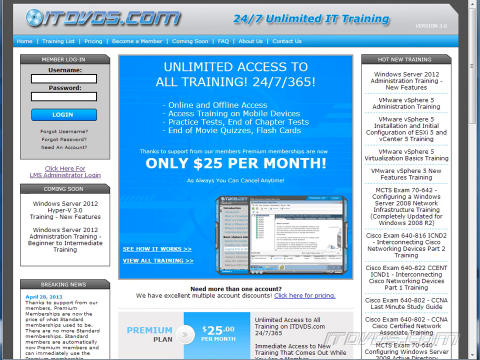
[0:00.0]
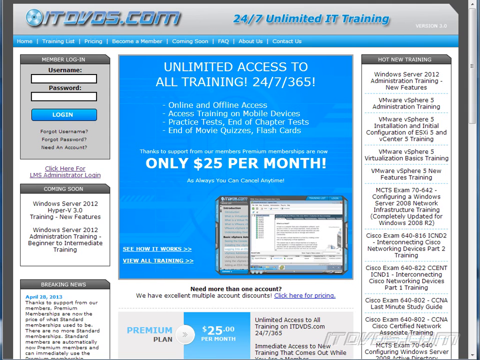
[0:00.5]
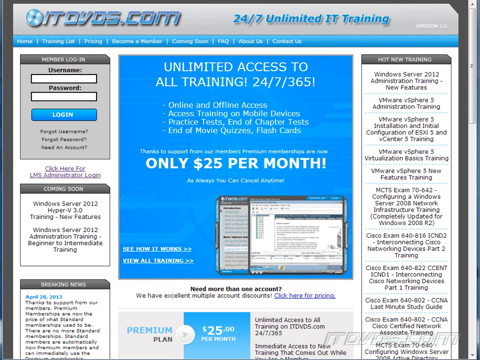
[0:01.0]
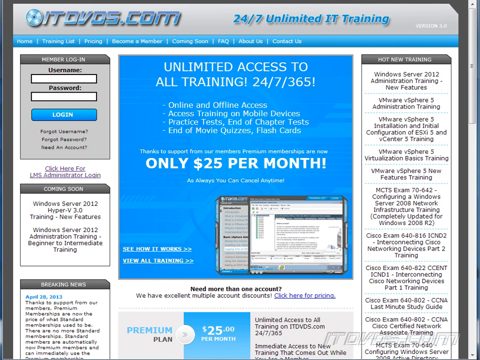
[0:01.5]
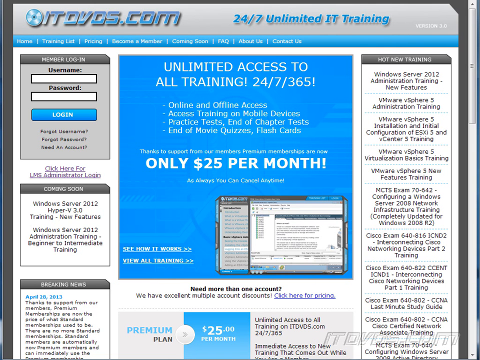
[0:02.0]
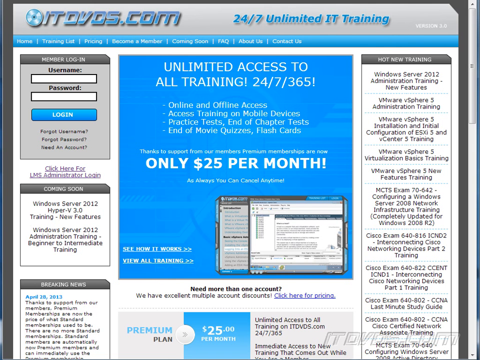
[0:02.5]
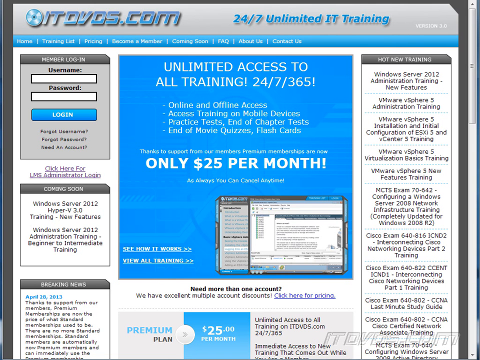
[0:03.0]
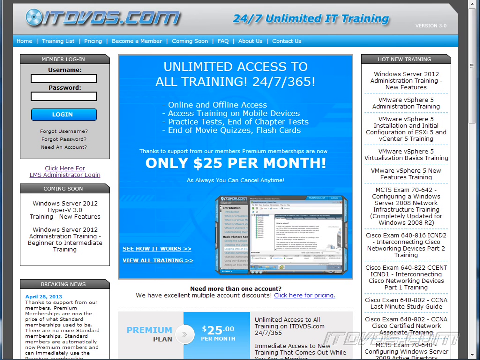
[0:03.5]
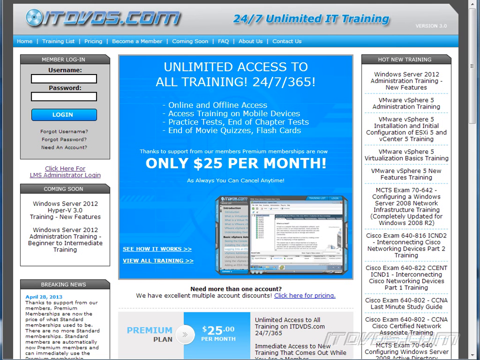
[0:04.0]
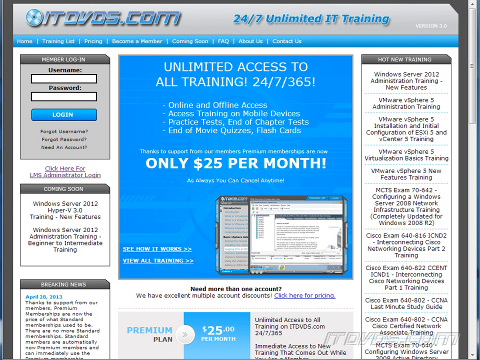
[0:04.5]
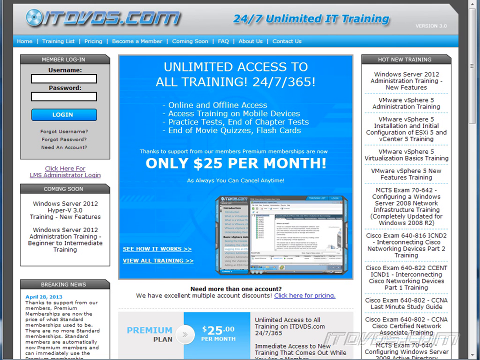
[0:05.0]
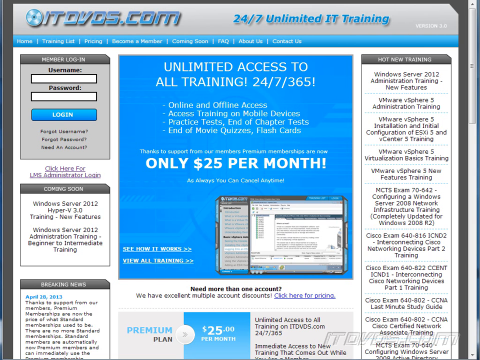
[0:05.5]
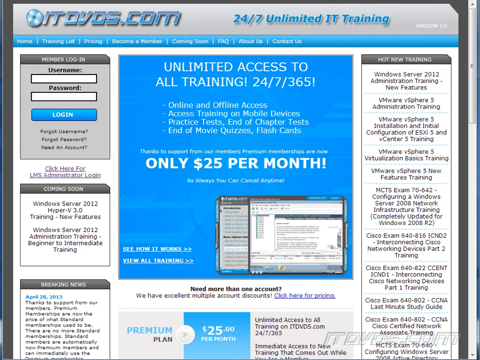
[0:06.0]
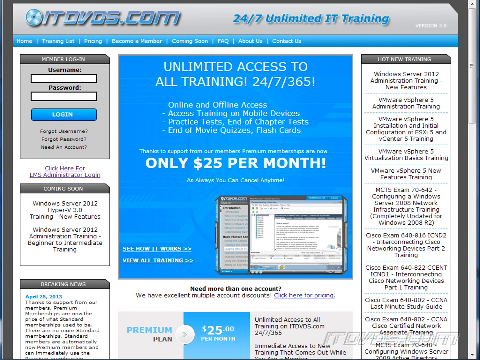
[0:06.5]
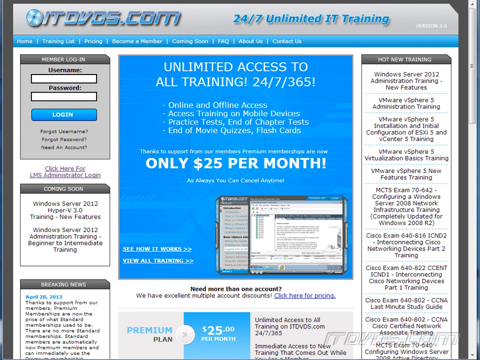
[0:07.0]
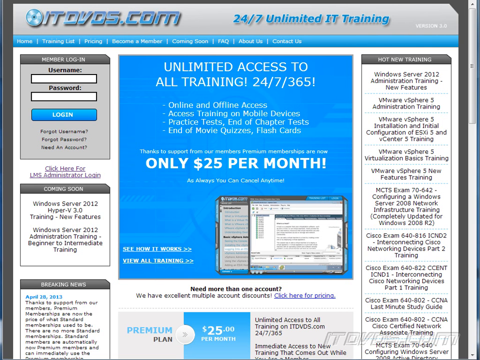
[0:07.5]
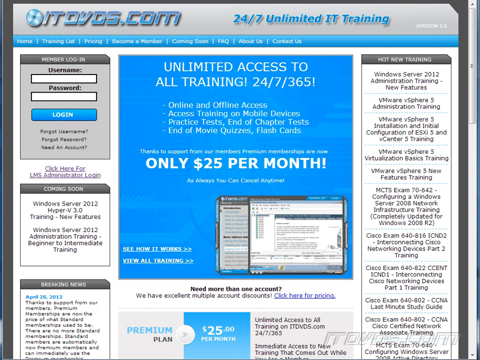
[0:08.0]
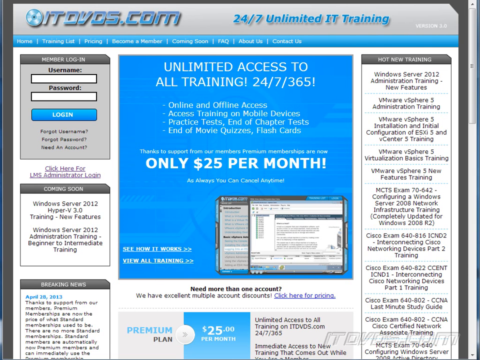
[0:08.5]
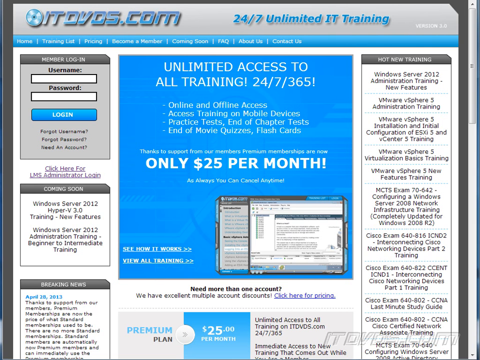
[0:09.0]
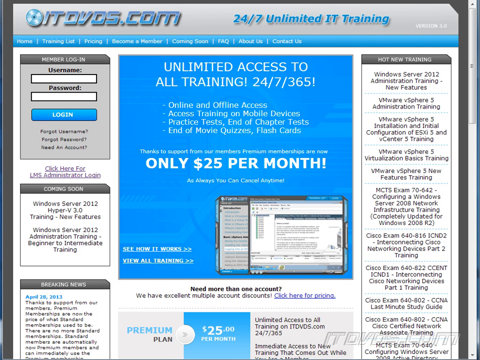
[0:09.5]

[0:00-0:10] An advertisement says there is "unlimited access to all training 24x7, 365 days" and that it is "only $24 per month." It also mentions a "hot new training" for Windows Server 2012 automation training, and the training appears to be mainly computer-related. A recording of a computer screen plays, showing a user restarting their computer. A username and password appear on the advertisement.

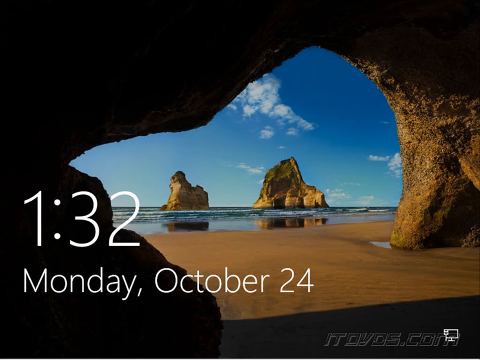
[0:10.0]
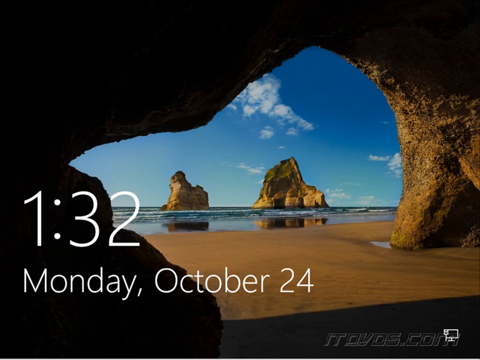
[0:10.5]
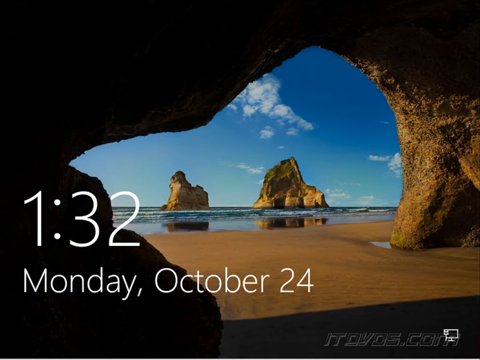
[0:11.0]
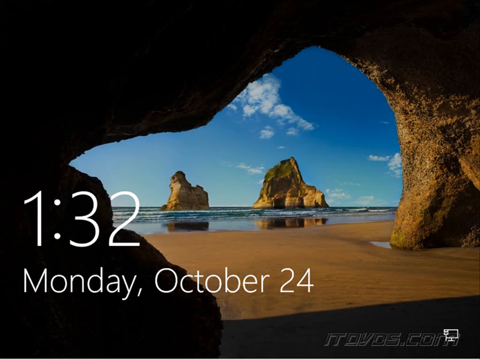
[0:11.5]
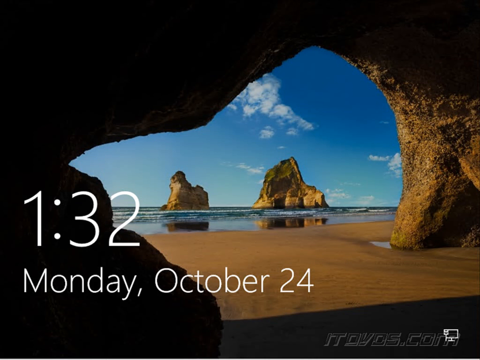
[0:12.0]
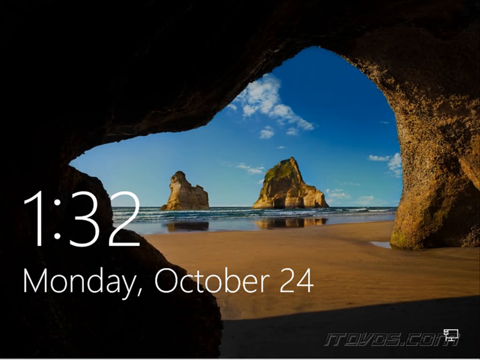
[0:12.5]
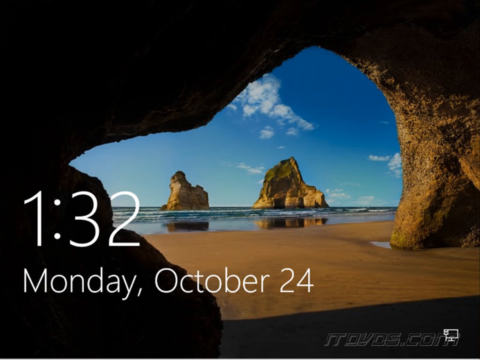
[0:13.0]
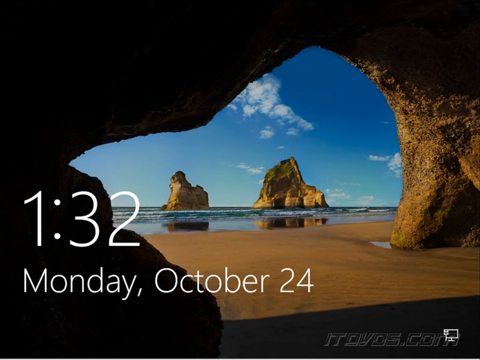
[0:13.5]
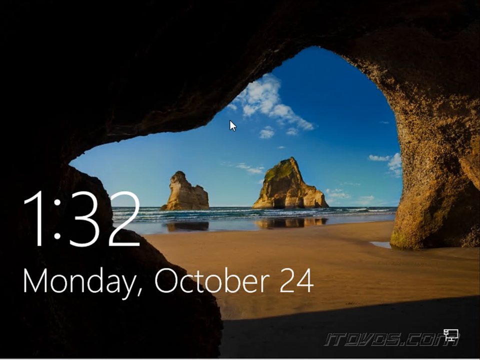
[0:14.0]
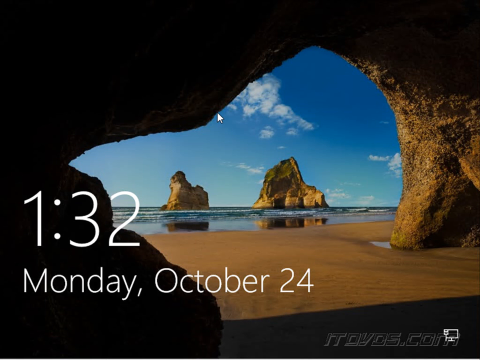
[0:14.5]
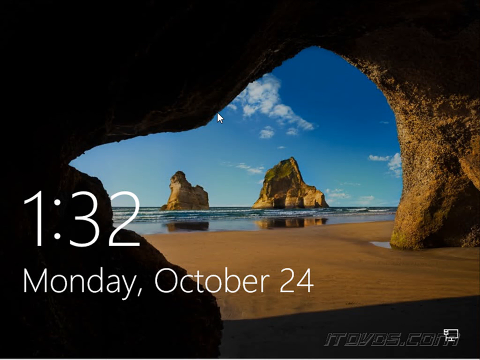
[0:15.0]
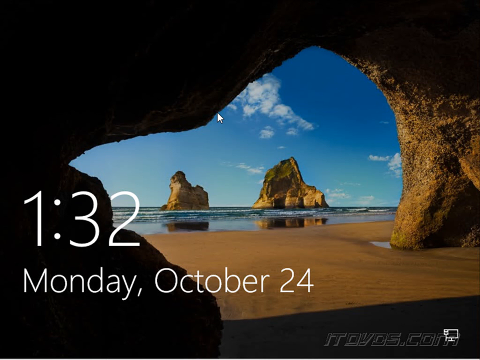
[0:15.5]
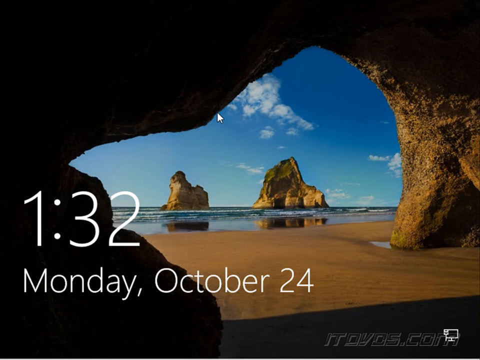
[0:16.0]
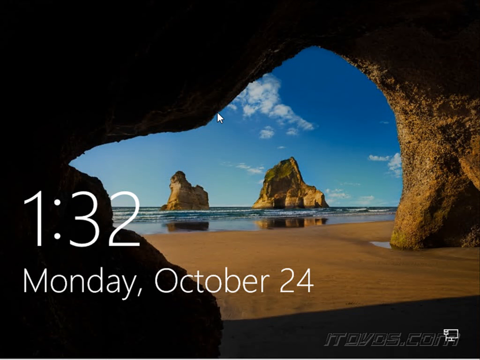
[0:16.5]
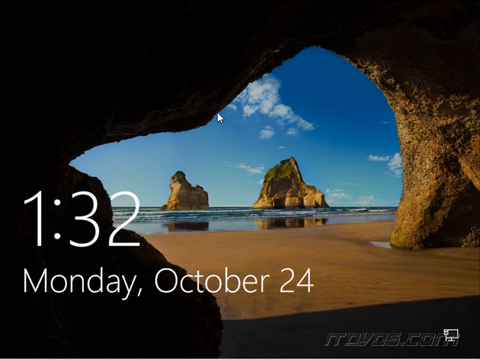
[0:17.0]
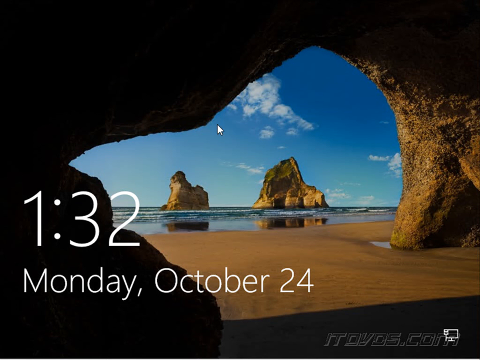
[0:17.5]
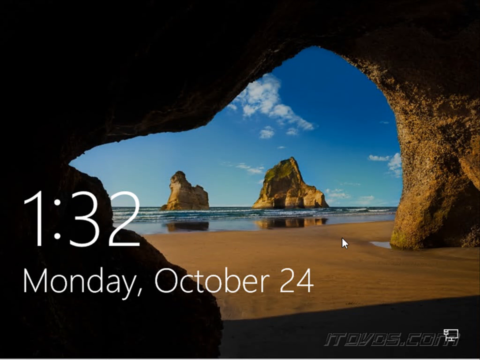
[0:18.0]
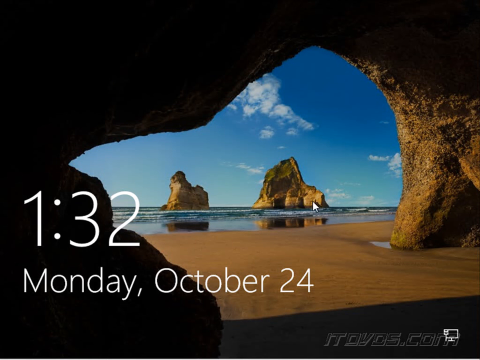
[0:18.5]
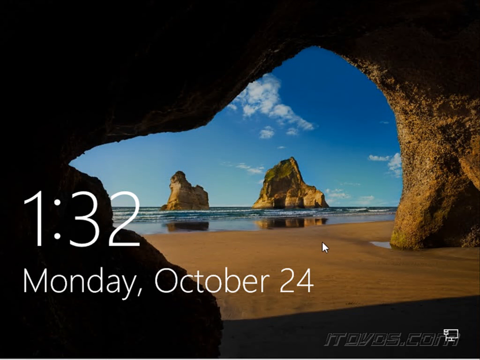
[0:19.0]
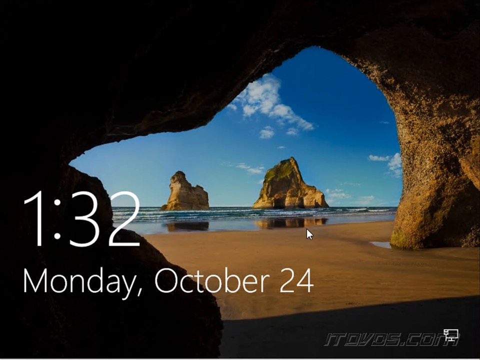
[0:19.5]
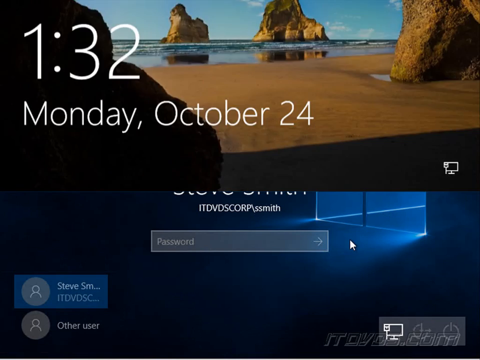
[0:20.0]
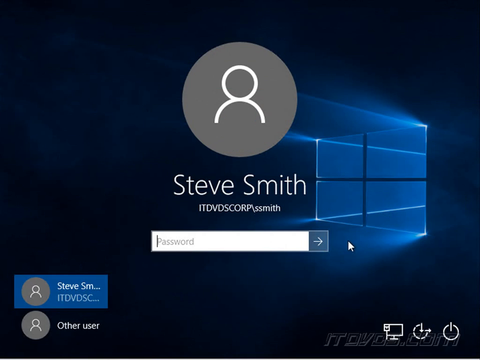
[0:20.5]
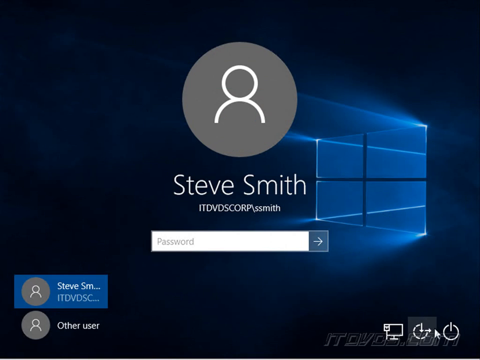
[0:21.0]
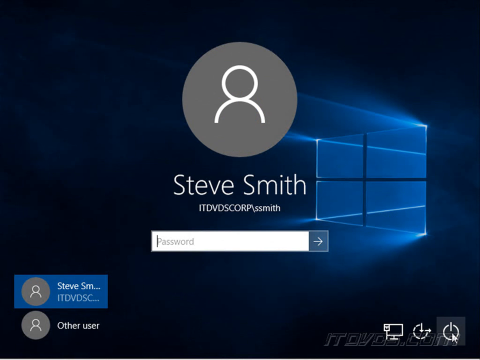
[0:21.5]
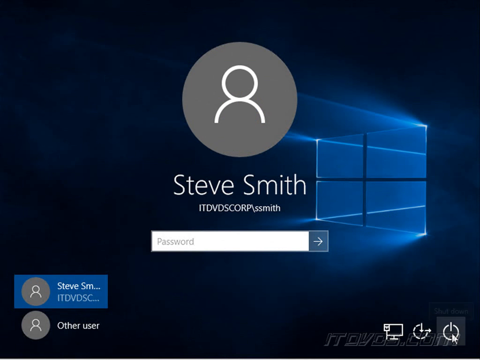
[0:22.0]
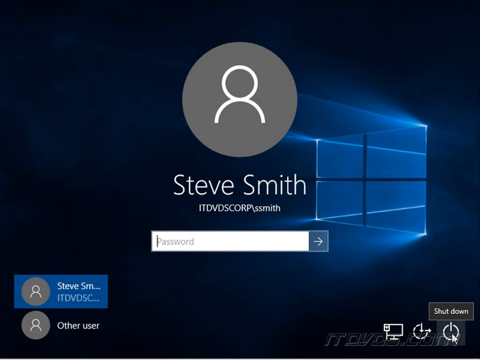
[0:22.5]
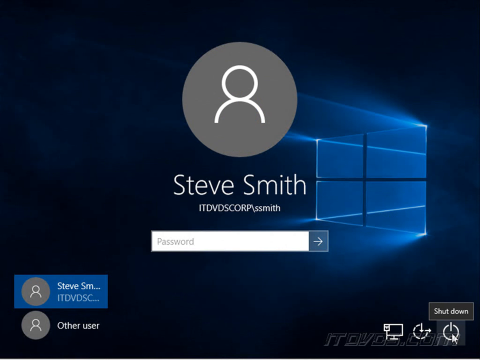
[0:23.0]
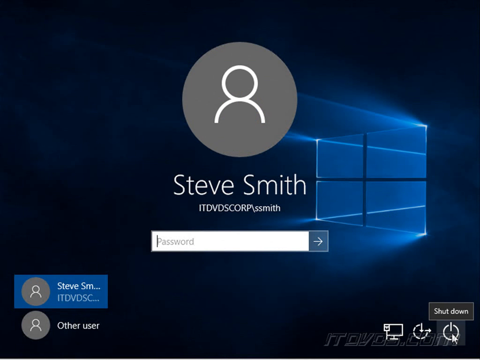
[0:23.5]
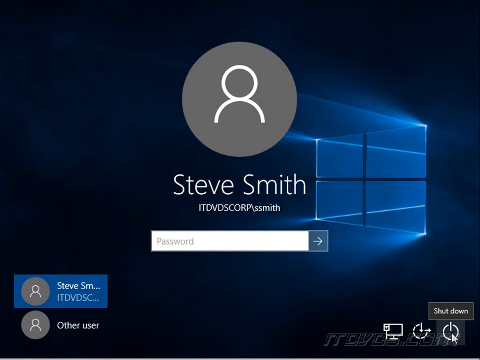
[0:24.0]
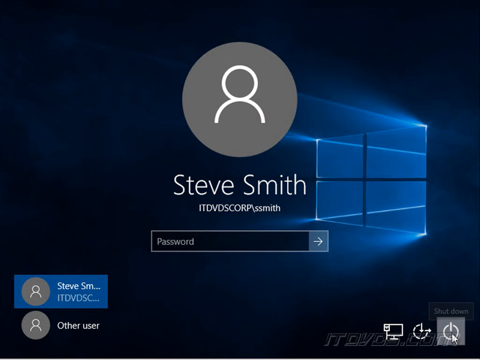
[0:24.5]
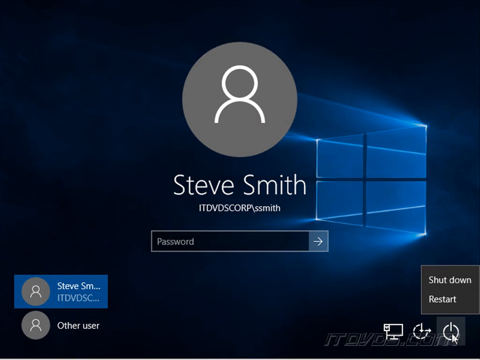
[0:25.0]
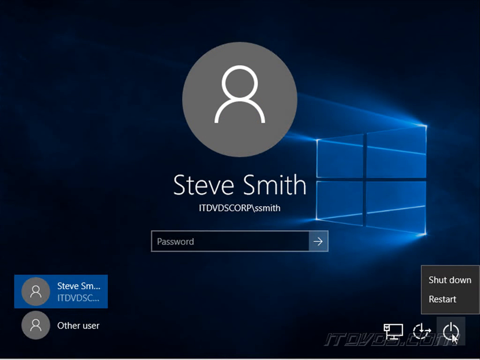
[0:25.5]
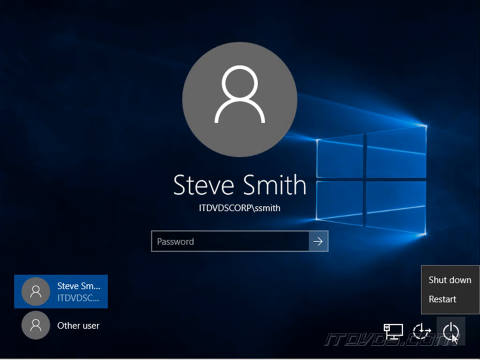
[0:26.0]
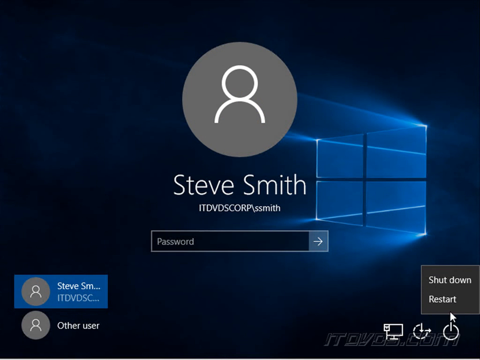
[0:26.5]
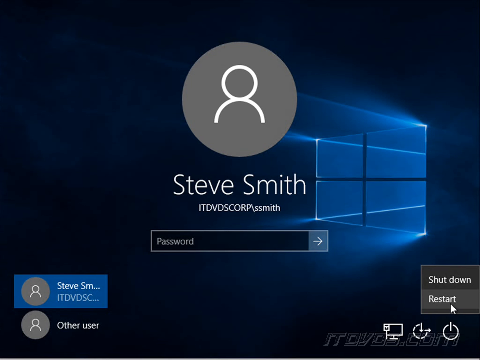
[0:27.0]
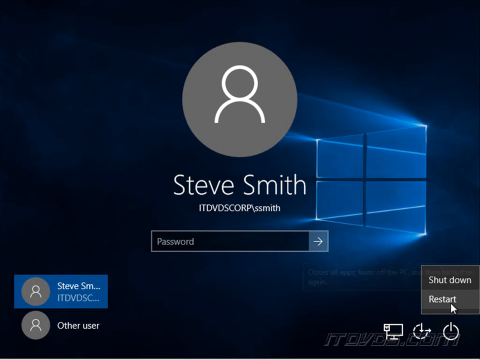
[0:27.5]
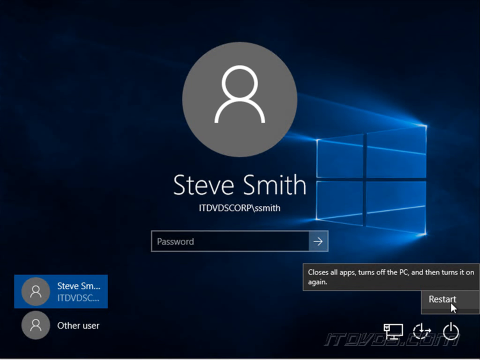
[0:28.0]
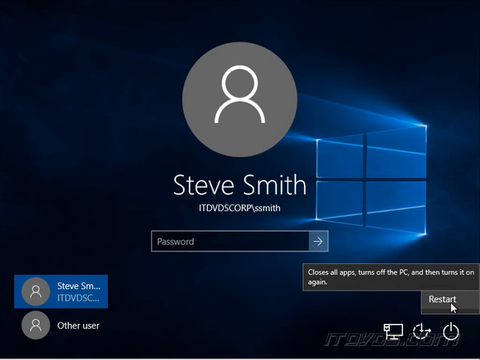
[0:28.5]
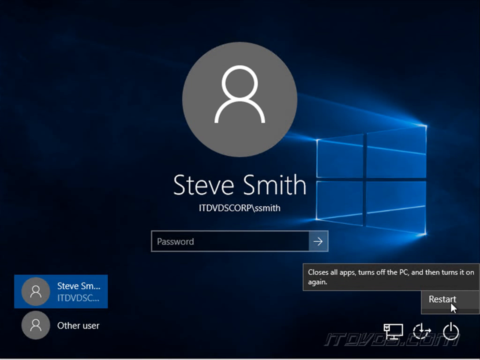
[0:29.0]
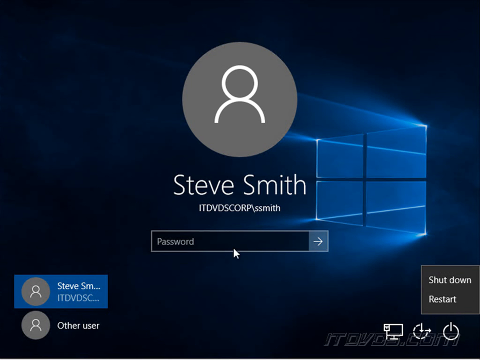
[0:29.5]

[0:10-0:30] The computer belongs to Steve Smith, and he is entering his password on the desktop. The screen shows that it is Monday, October 24th, and the time shown is 28 minutes before one o'clock. The user is trying to restart the computer, and a mouse is being used. The computer runs Windows 7, and the user's name is Steve Smith. The screen saver shows an ocean, with what looks like a cave that has the ocean and a beach inside.